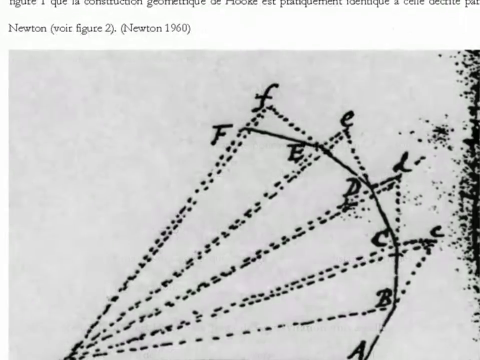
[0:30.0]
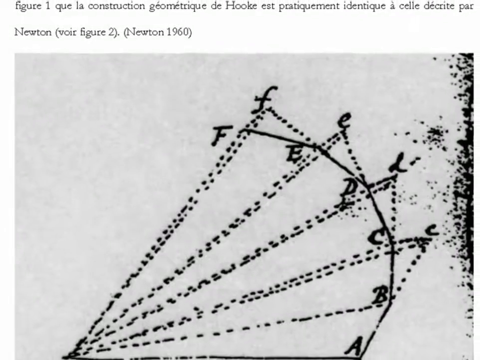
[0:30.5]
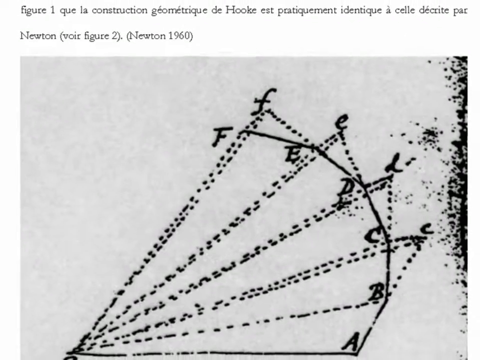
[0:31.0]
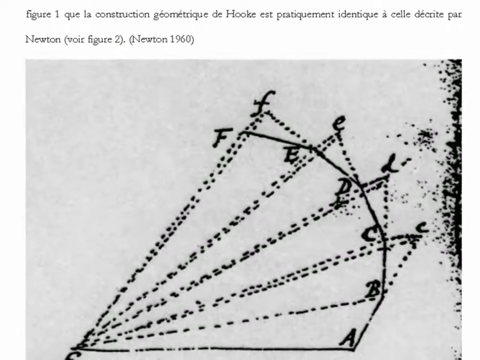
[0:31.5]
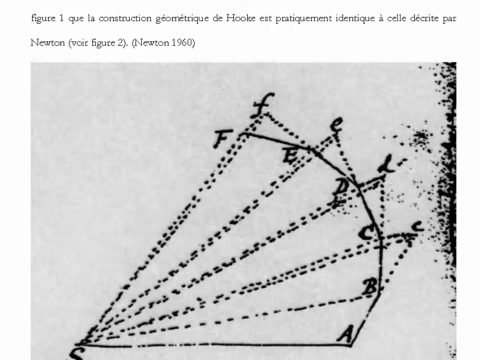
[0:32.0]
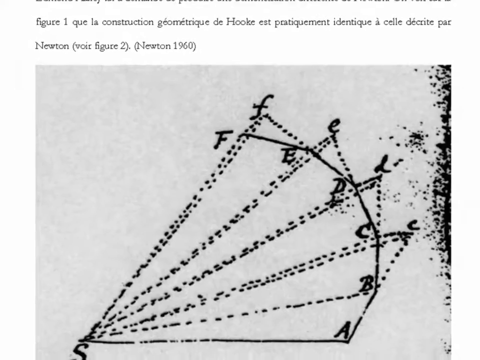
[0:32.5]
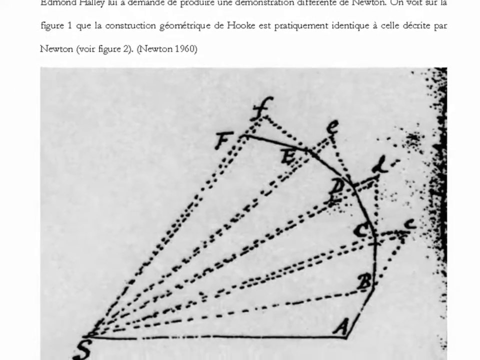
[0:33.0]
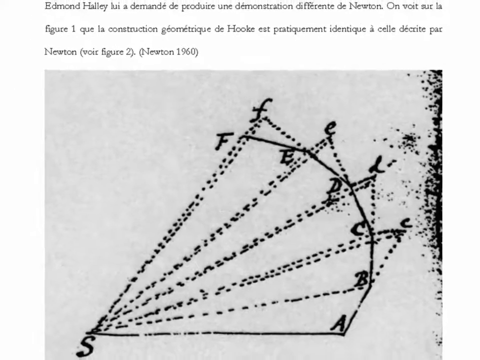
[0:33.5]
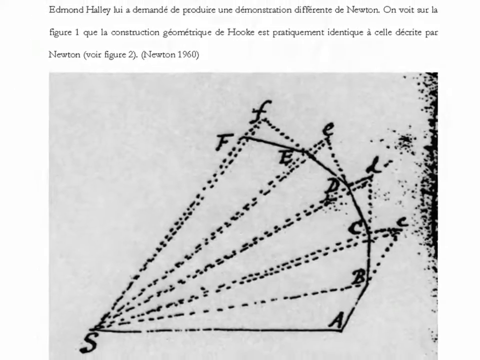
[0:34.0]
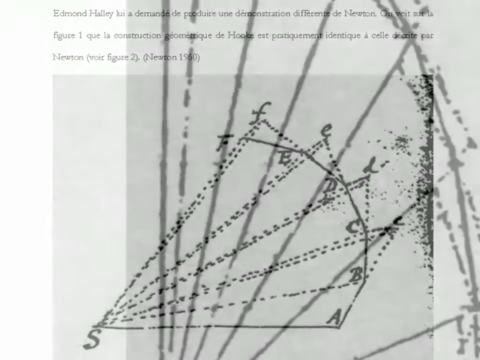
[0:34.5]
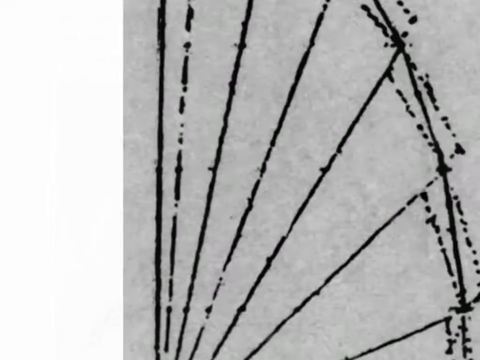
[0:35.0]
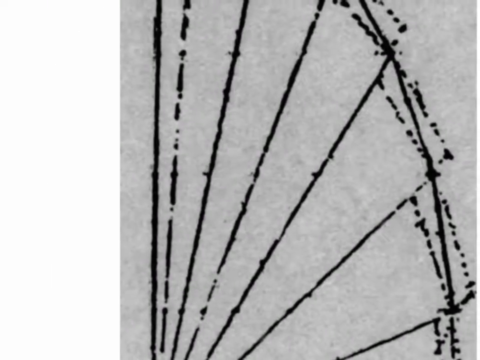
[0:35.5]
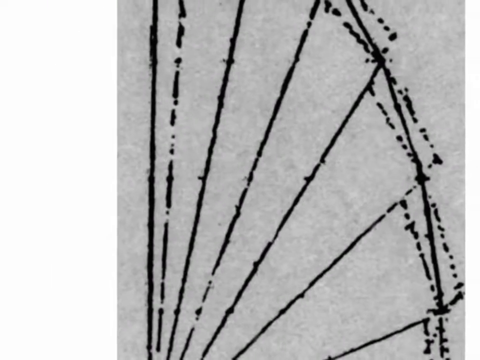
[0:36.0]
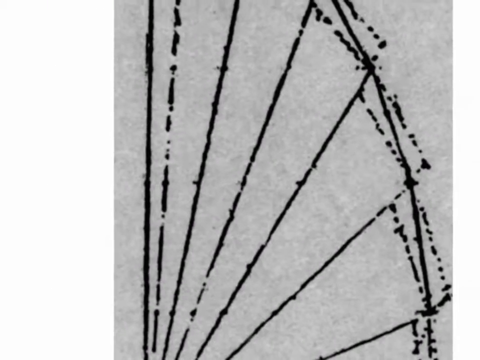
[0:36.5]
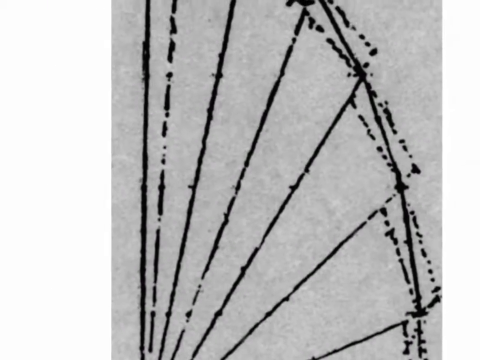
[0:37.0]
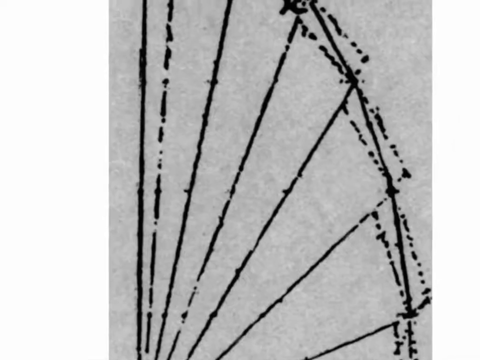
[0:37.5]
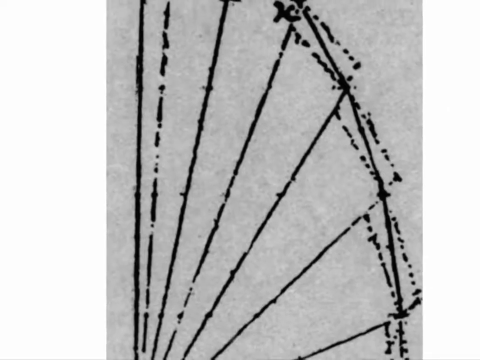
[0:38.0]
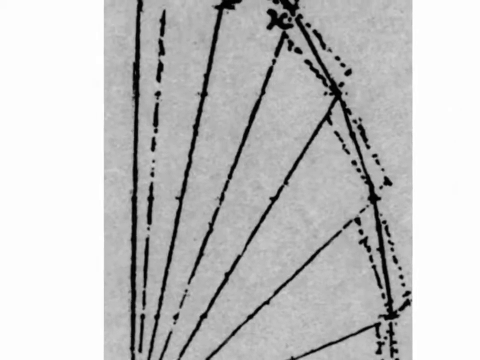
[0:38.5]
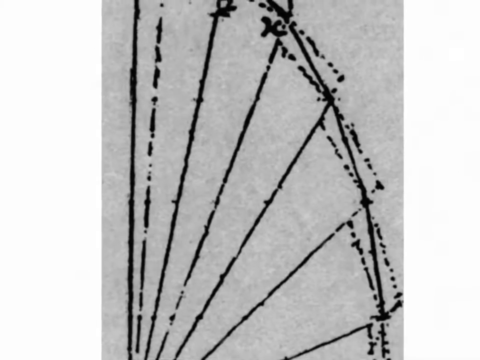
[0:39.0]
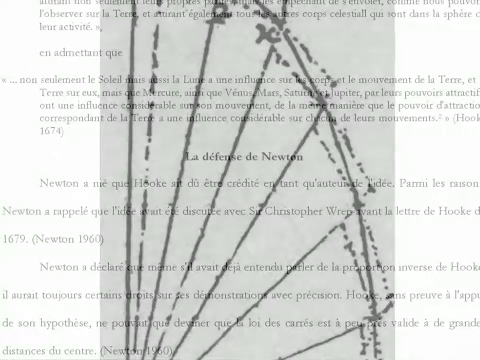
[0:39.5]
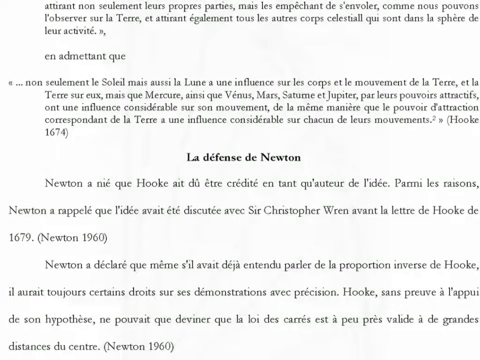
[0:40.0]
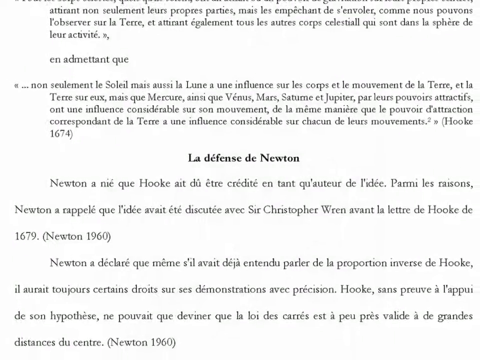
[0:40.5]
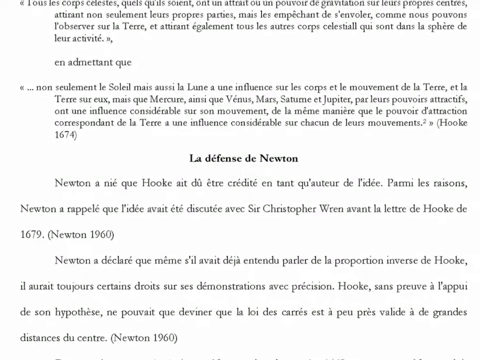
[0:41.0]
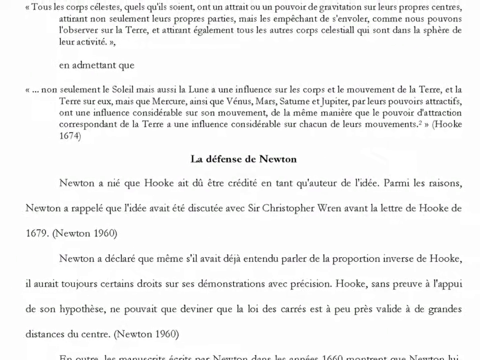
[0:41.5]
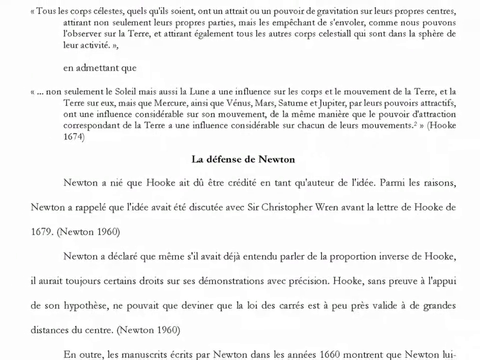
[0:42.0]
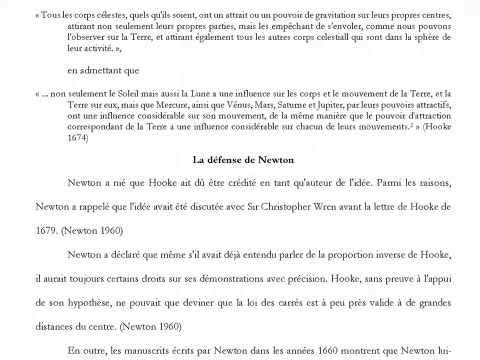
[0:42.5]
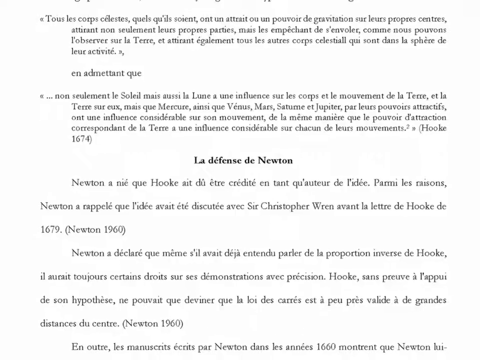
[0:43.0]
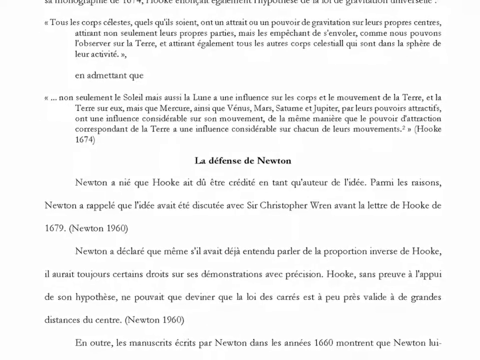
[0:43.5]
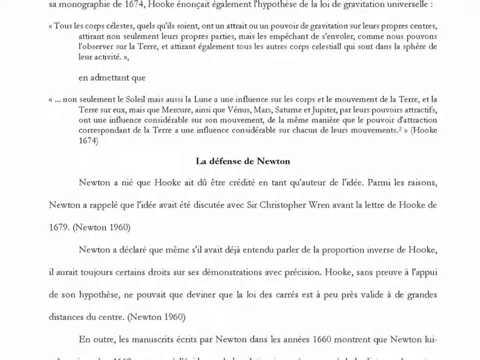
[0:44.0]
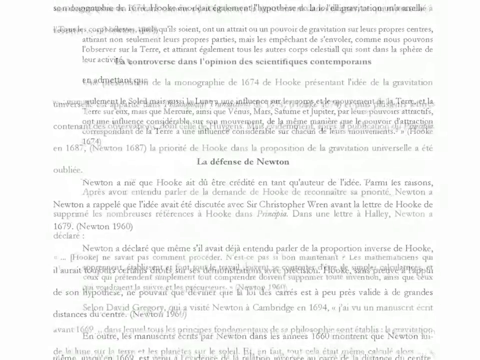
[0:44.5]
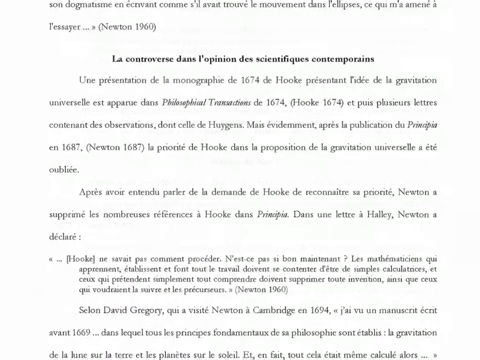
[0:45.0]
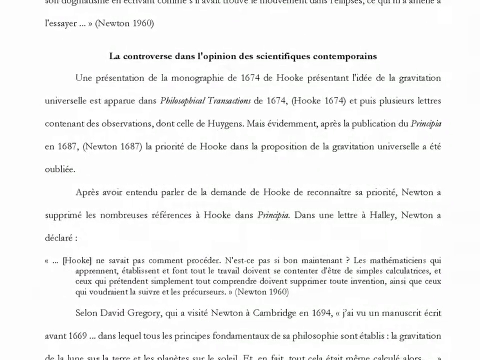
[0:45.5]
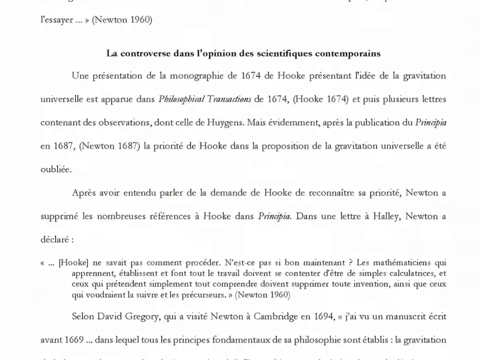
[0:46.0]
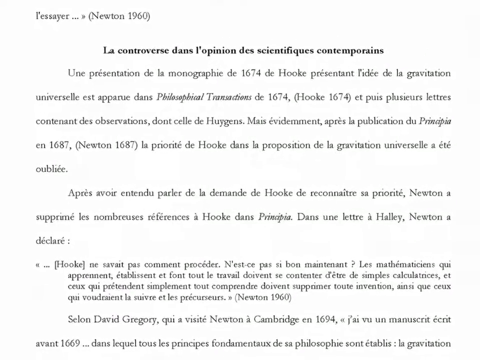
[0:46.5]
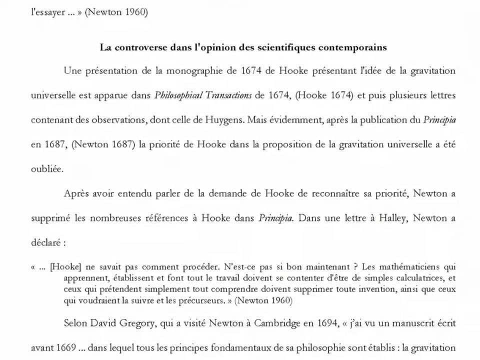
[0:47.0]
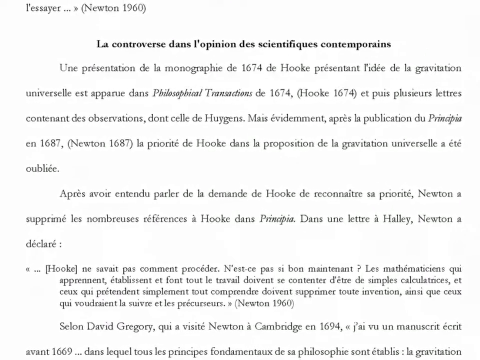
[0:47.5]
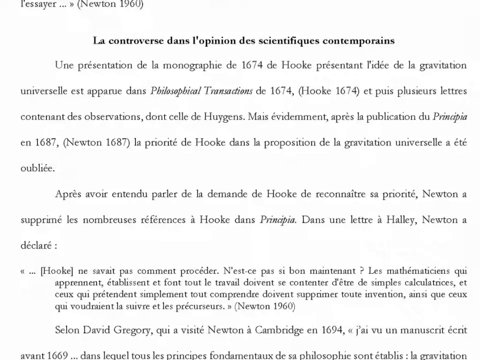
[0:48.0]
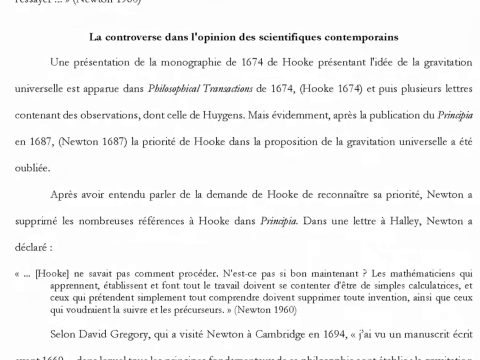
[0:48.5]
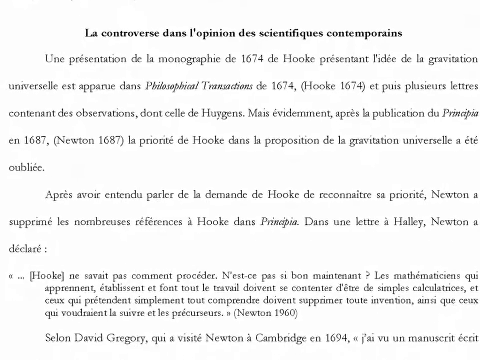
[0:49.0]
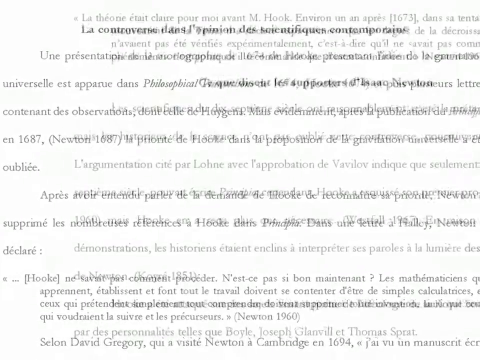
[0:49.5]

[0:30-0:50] The video shows more of the diagrams, and it is unclear whether they are Newton's or Hooke's. The shot pans between different material on Hooke and Newton. Text indicates that figure two was made by Newton in 1960. A different small diagram shows its little parts. The video scrolls through different sections, apparently including ones on the defense of Newton, what Hooke wrote, and the controversy.